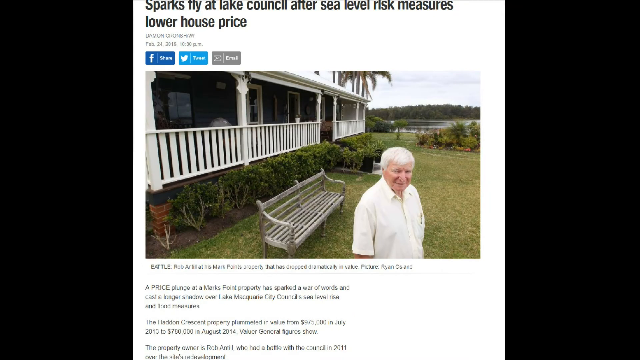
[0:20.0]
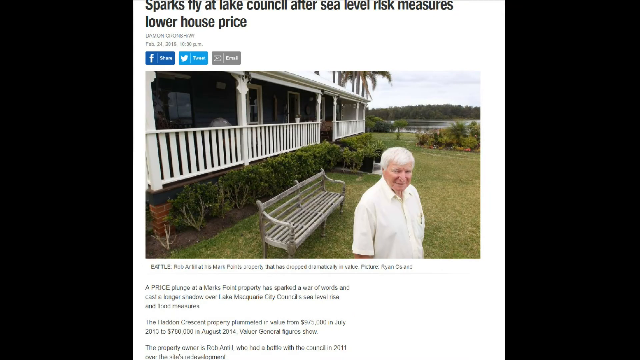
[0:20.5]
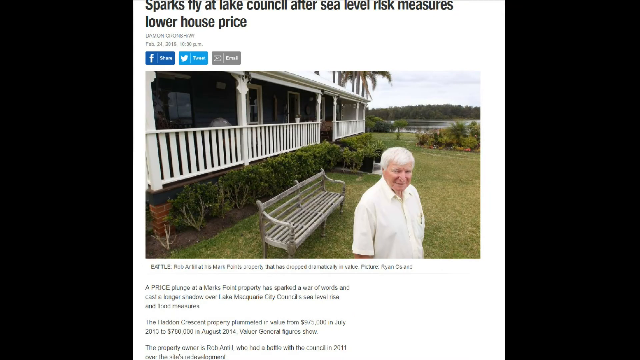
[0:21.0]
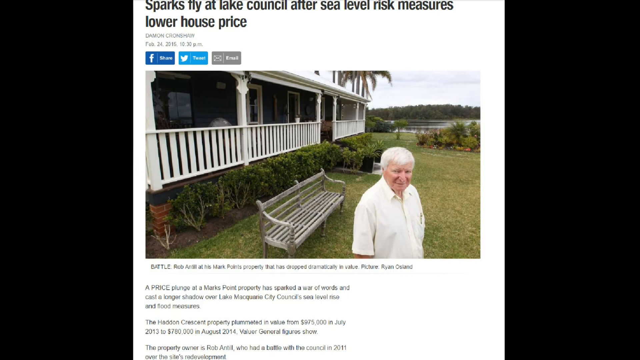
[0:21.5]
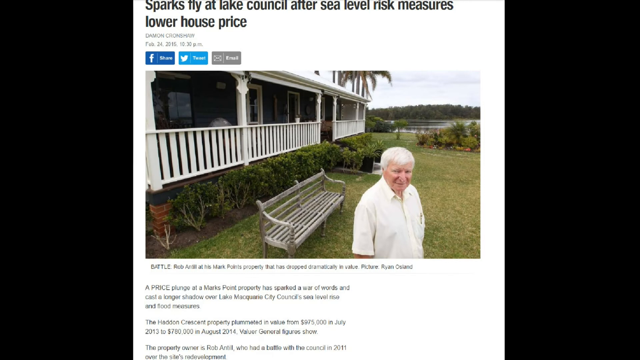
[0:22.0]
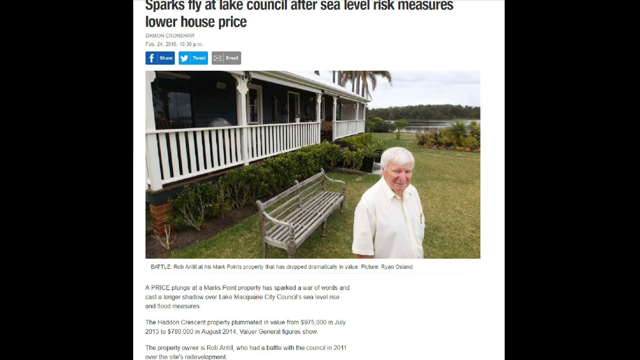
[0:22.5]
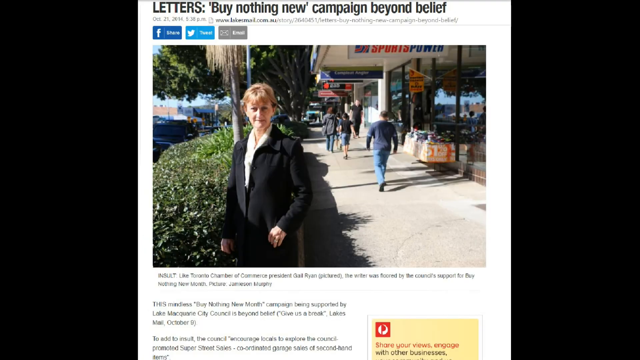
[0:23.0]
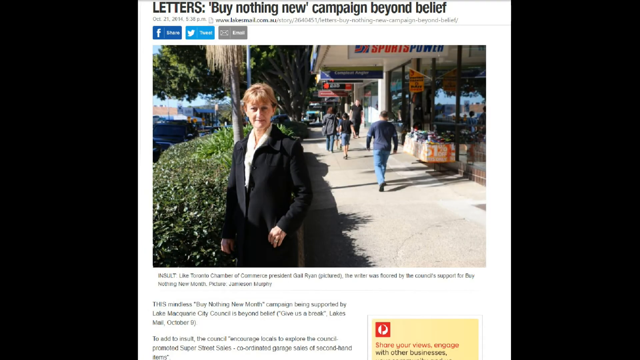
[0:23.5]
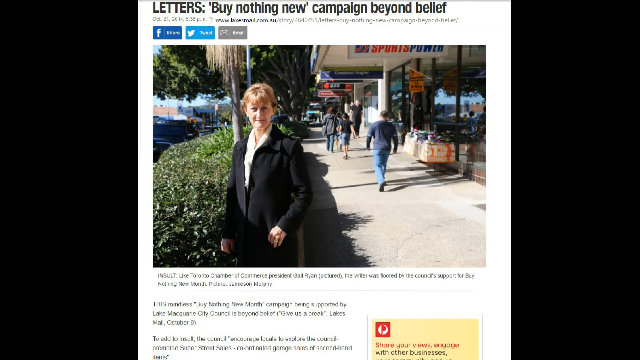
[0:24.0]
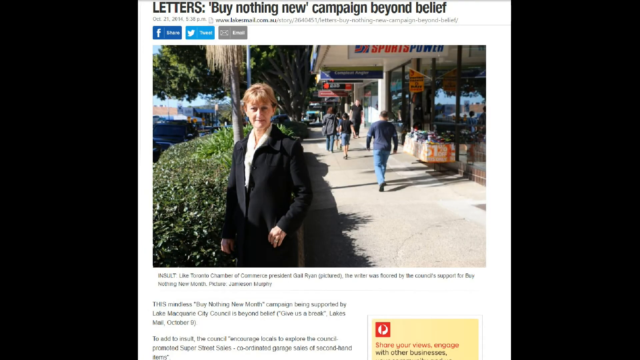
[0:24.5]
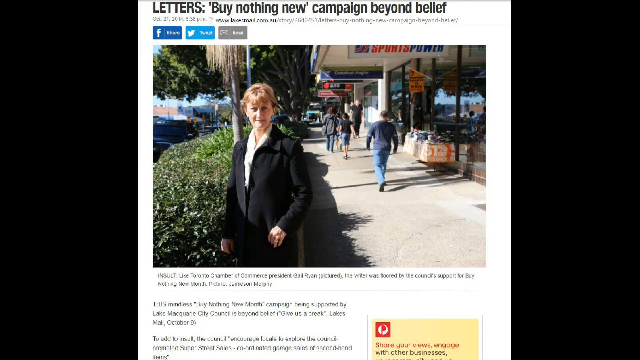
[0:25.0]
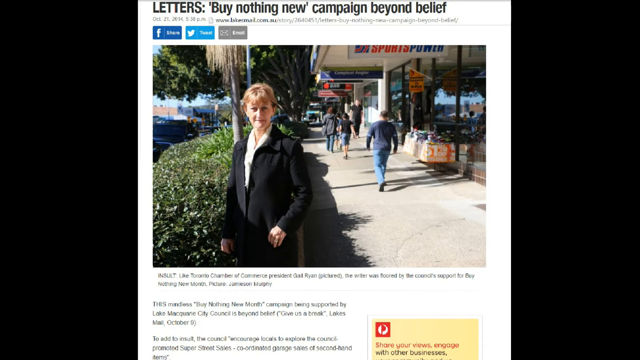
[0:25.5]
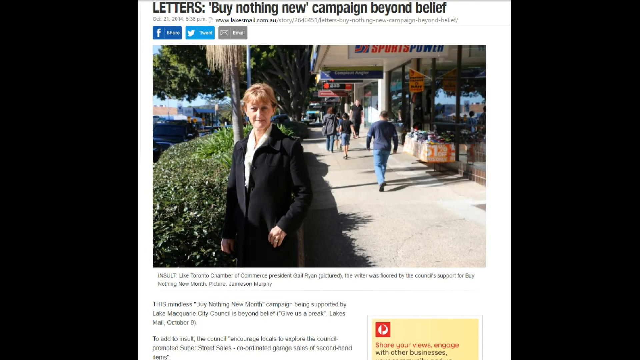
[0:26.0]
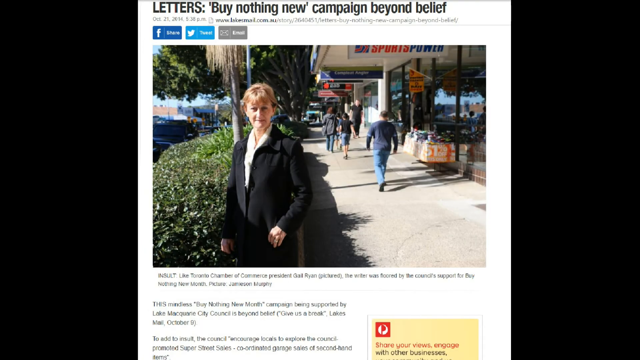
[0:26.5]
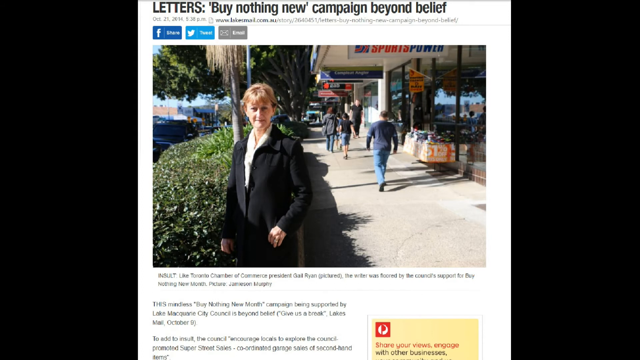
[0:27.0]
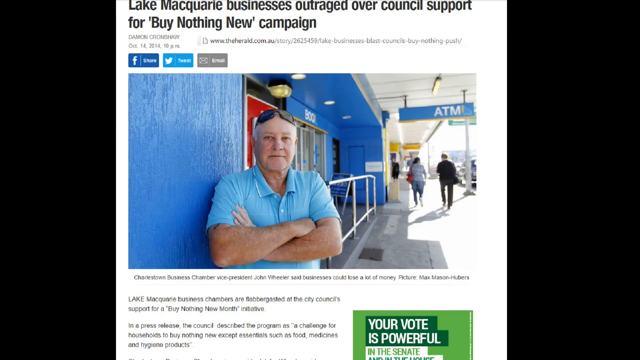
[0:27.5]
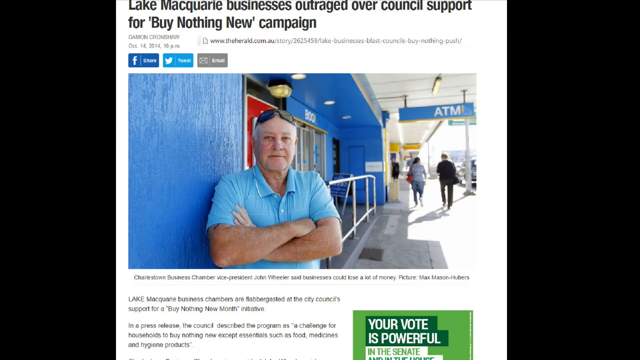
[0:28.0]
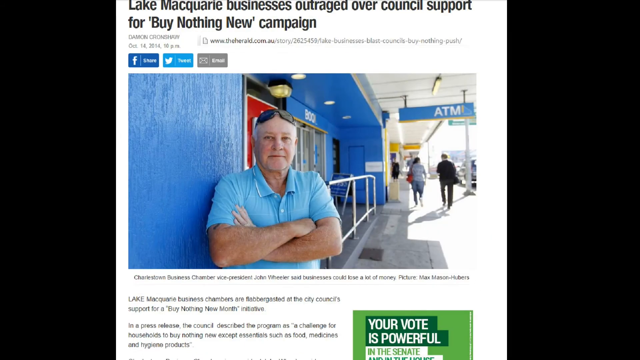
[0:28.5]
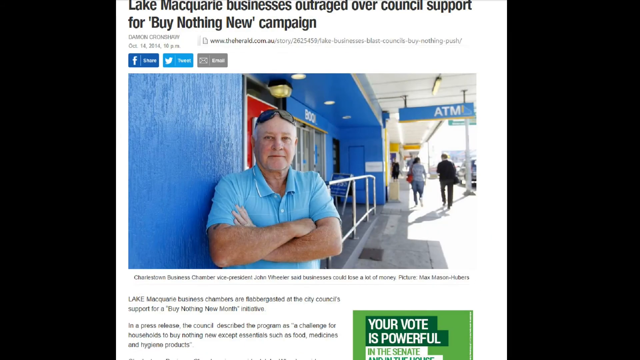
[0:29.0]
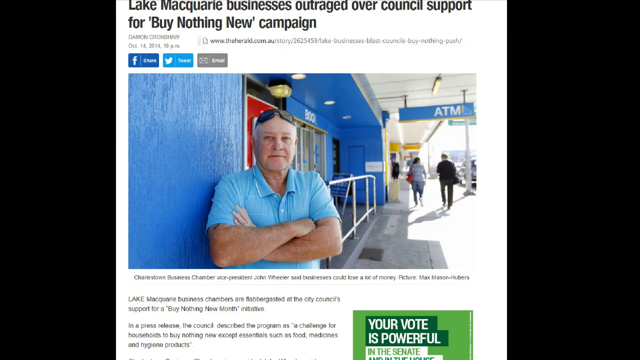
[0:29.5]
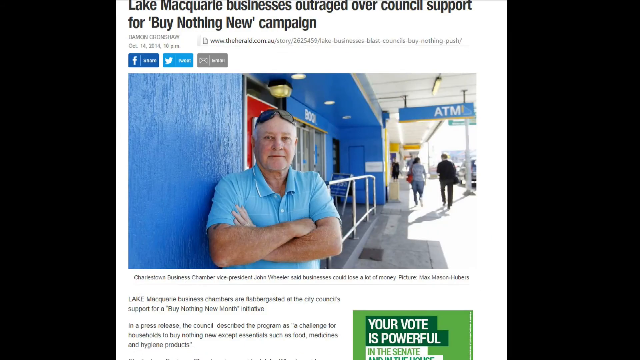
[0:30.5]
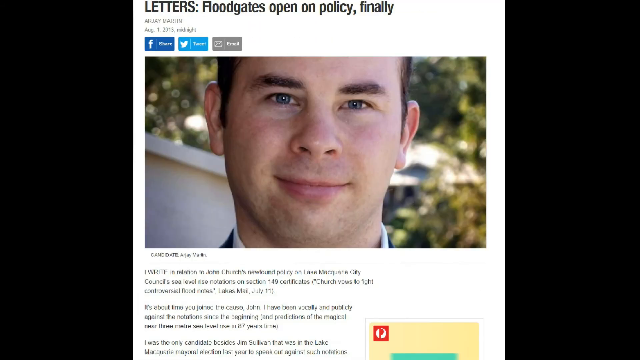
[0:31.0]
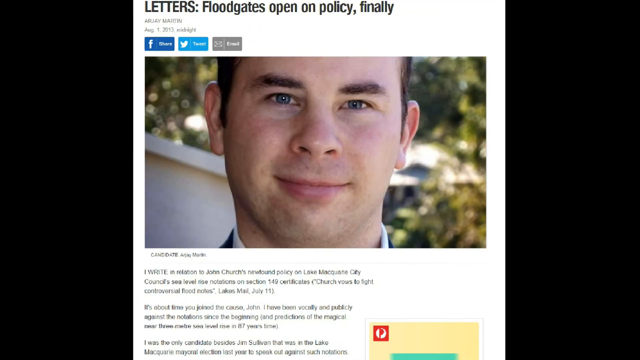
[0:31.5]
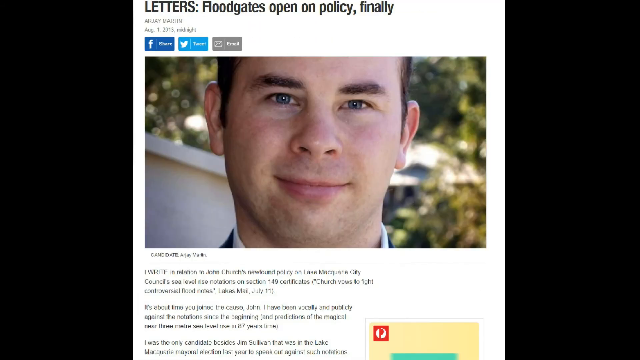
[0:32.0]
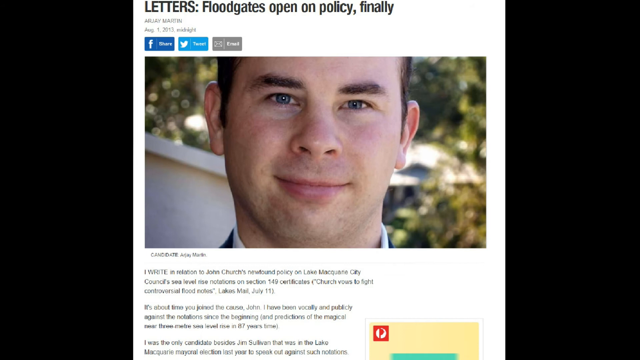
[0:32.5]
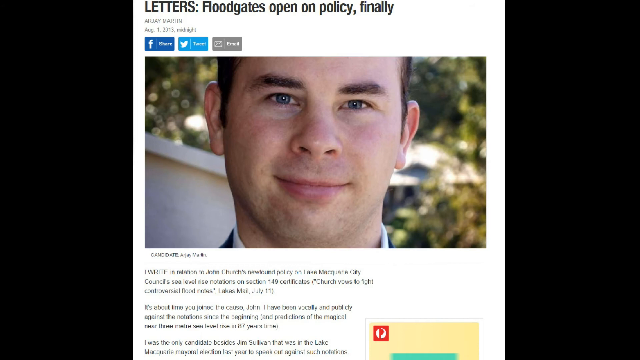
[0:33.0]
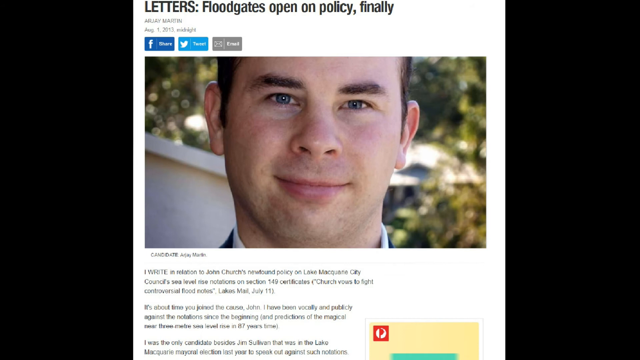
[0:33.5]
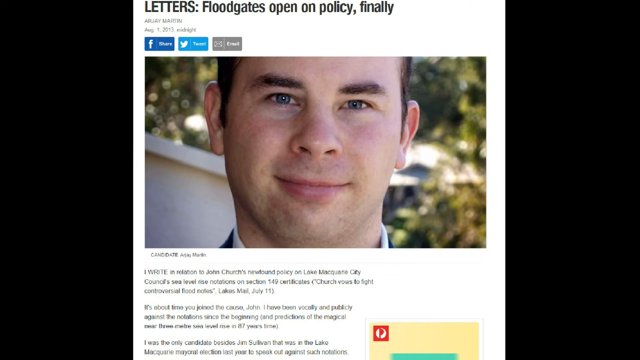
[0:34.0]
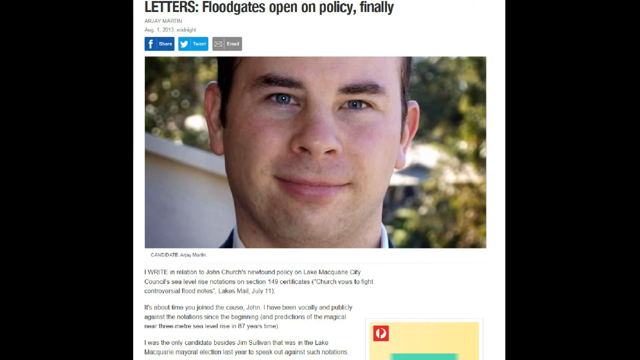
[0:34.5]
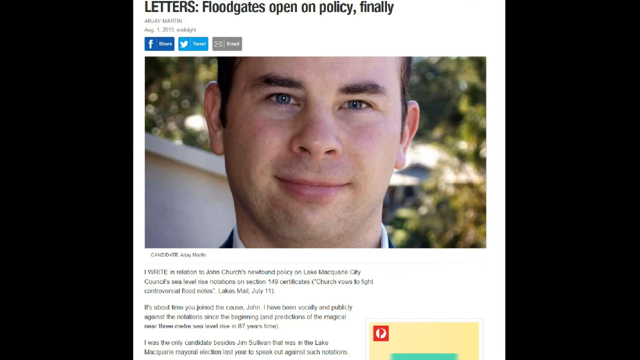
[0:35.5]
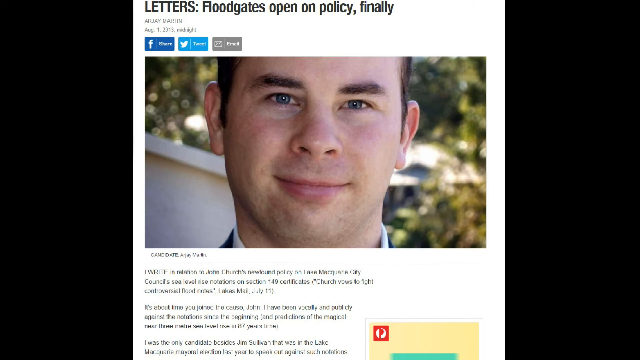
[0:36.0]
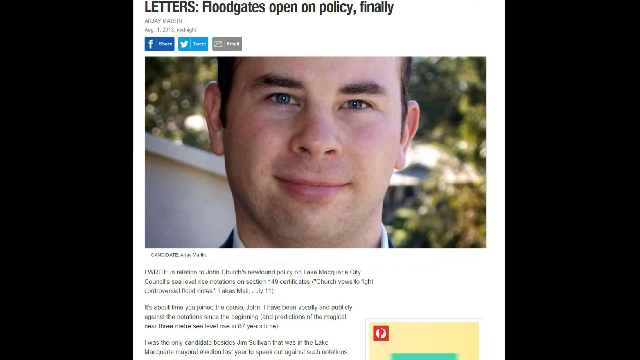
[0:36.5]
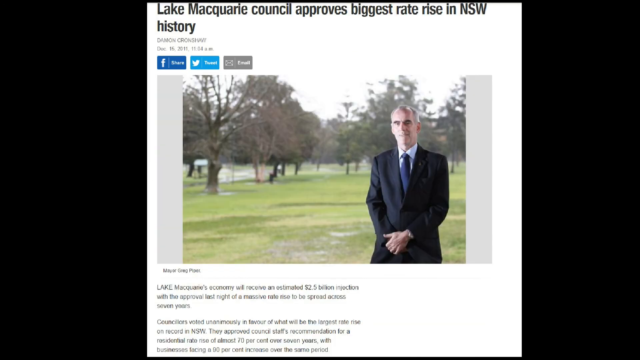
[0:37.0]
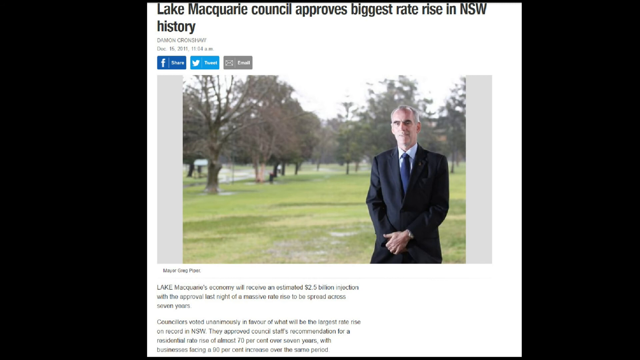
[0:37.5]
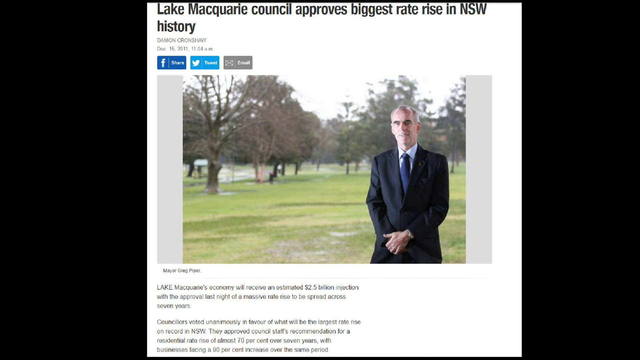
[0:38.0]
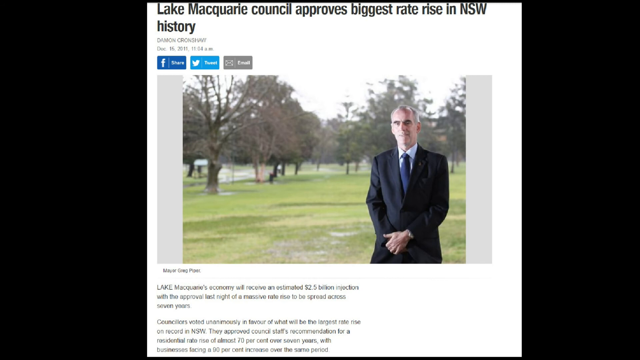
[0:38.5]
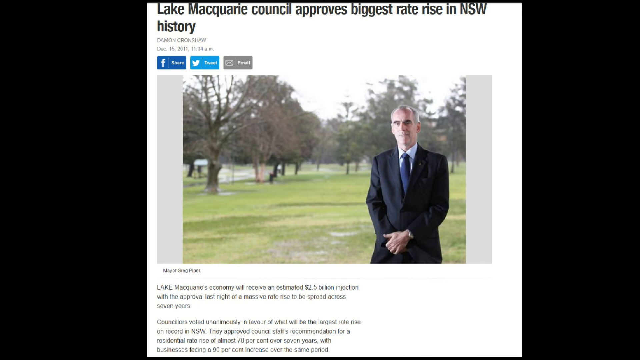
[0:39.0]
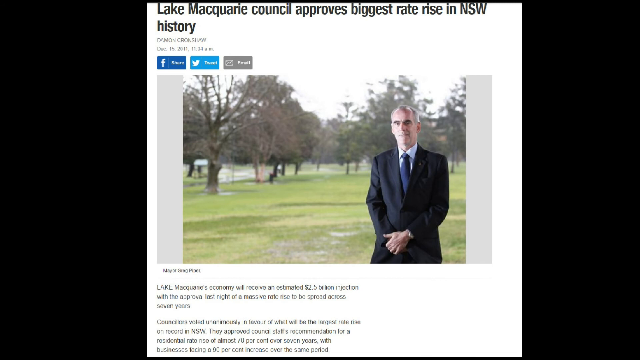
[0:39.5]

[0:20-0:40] The news article is still on screen, with buttons in the middle of the screen: a blue one that says "share", a light blue one that says "tweet", and a gray one that says "e-mail". The scene changes to a woman in a long black business jacket standing in front of a line of buildings, with people walking on the sidewalk in front of the buildings in the background. She stands looking at the camera with her hands to her sides. The black title of this news article at the top of the screen reads "letters buy nothing new campaign beyond belief". Next comes another news article with a black title at the top reading "Lake Macquarie business outraged over council support for buy nothing new campaign". Its image shows a man in a light blue collared shirt standing in front of a blue bank building with his arms crossed in front of his body. He looks at the camera and has sunglasses on top of his head. A sign with white text reading "ATM" hangs from the roof in the background. The video then changes to another article with black text at the top reading "letters floodgates open on policy finally", showing a man in a suit smiling and looking at the camera; the picture is zoomed in on his face.